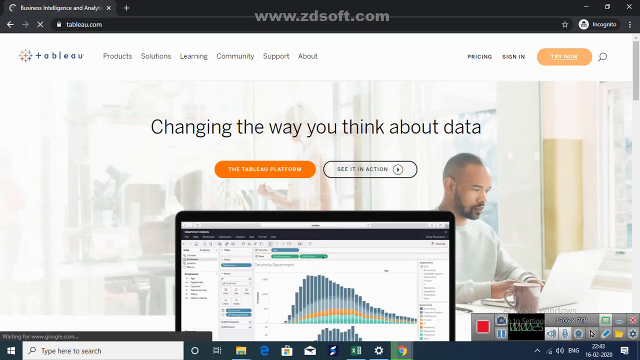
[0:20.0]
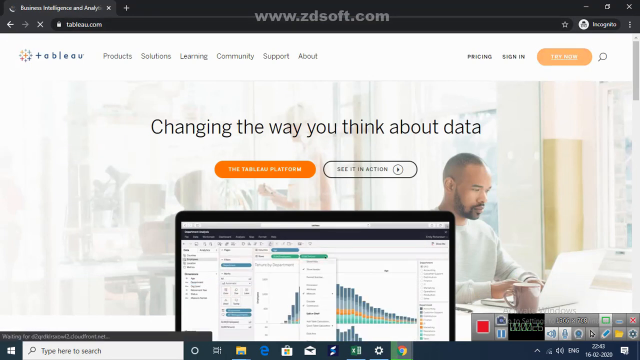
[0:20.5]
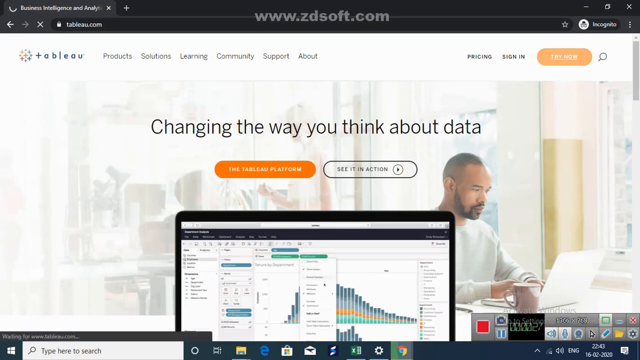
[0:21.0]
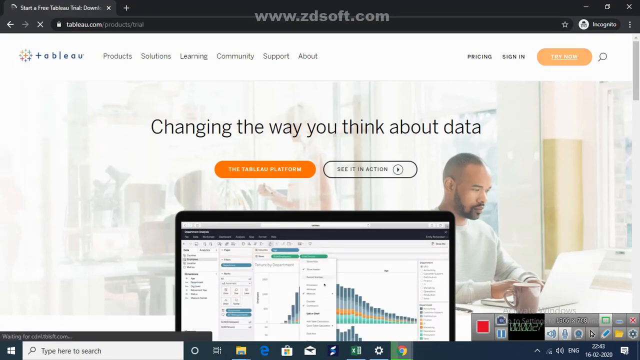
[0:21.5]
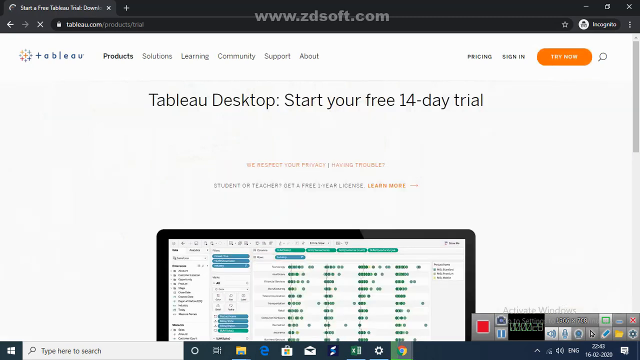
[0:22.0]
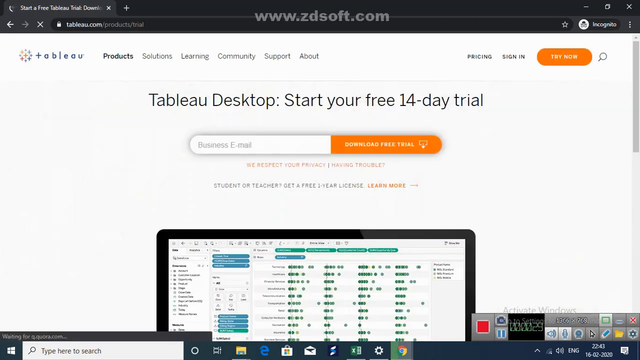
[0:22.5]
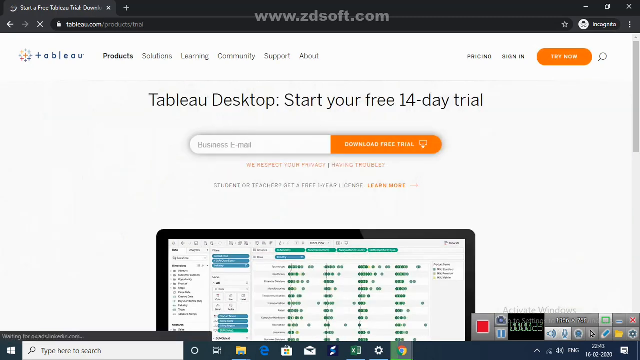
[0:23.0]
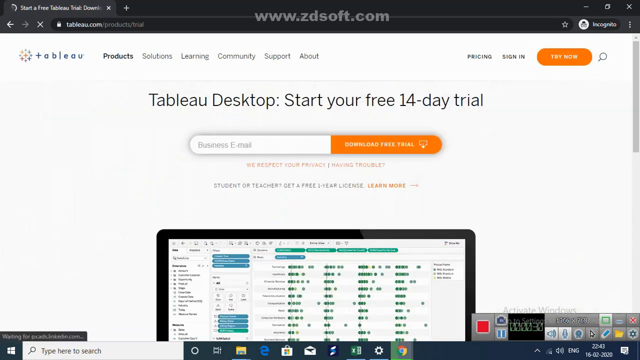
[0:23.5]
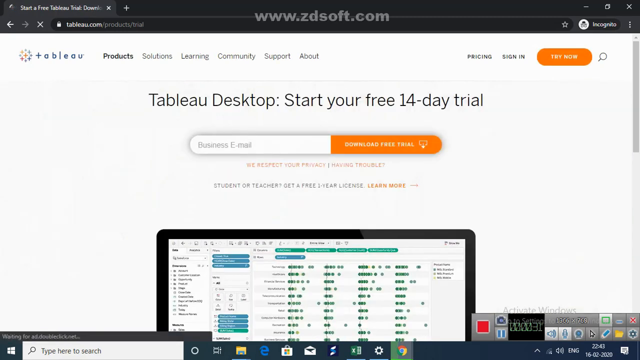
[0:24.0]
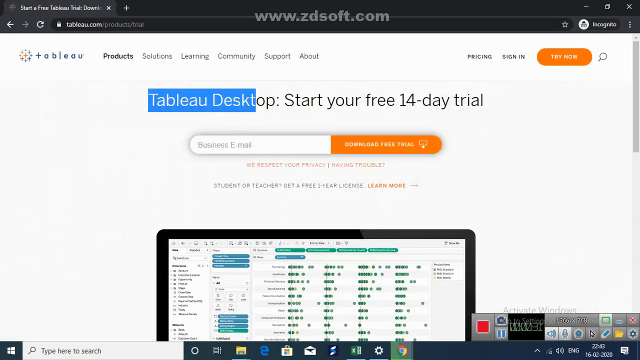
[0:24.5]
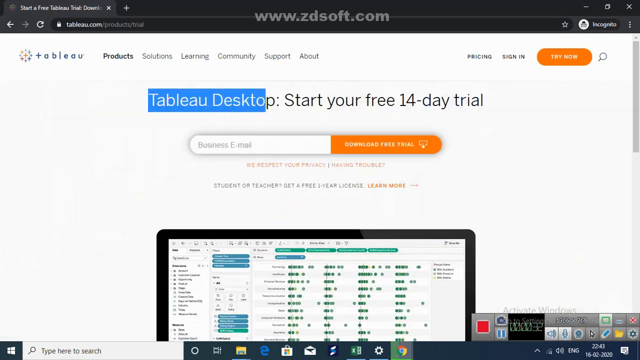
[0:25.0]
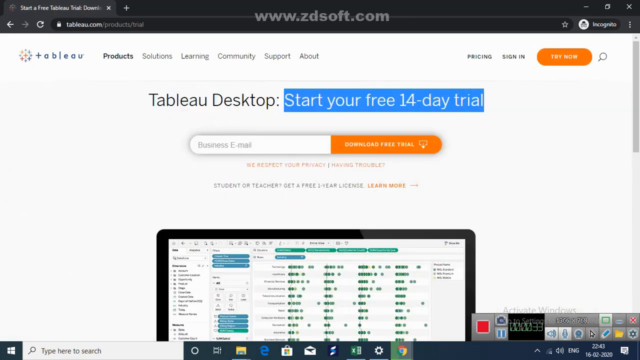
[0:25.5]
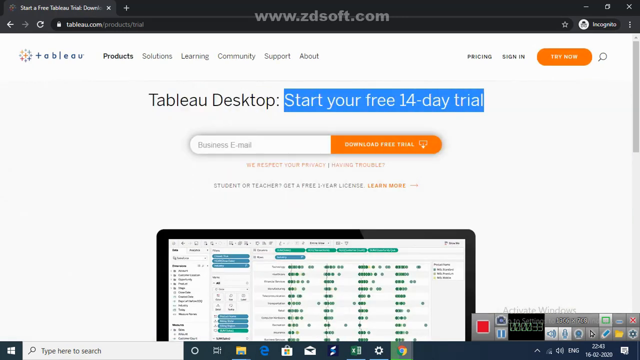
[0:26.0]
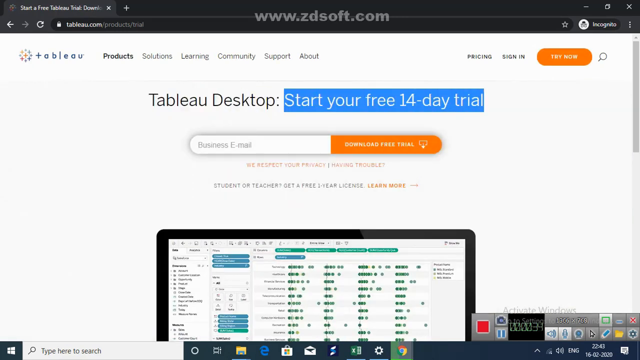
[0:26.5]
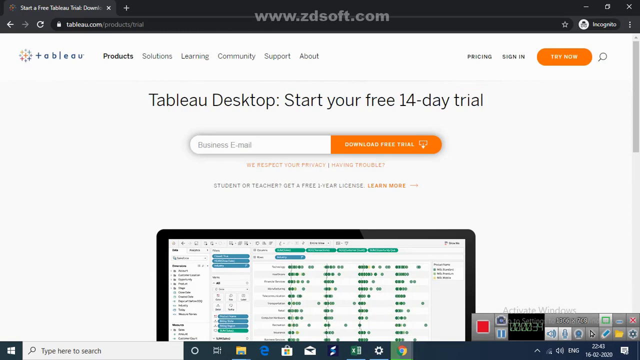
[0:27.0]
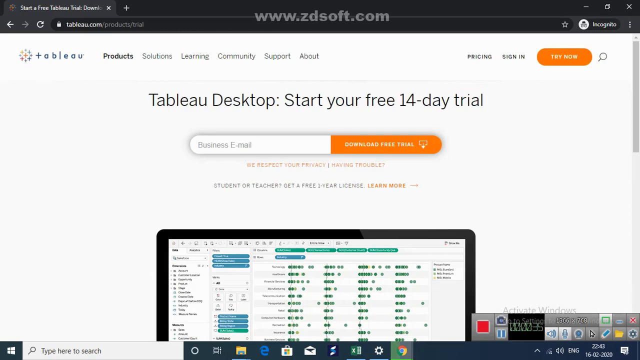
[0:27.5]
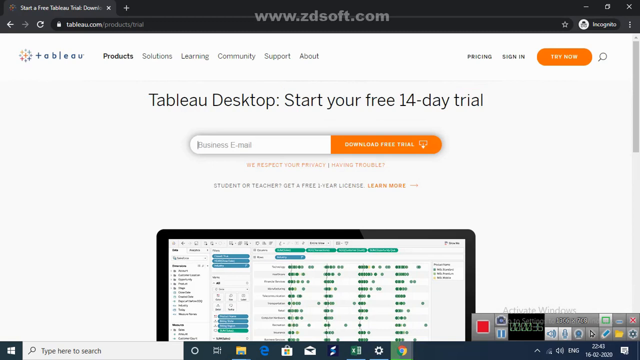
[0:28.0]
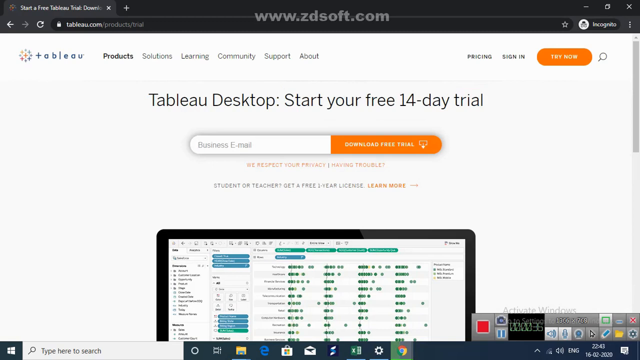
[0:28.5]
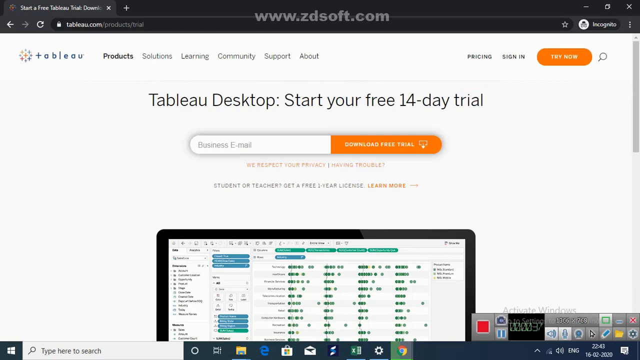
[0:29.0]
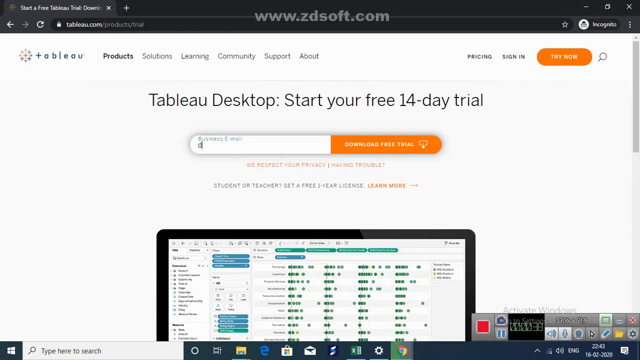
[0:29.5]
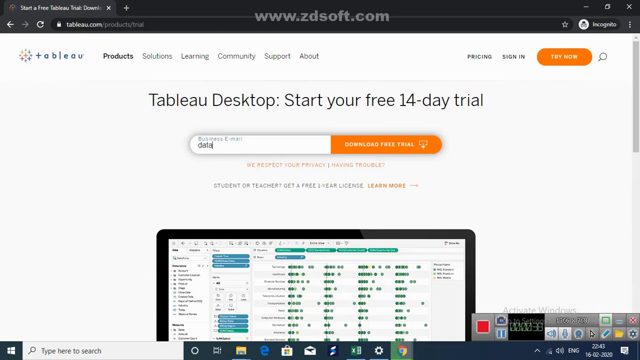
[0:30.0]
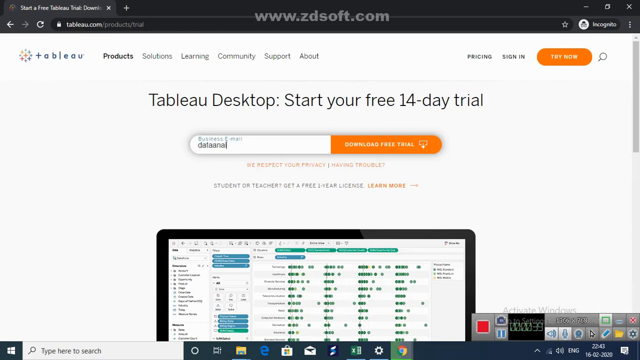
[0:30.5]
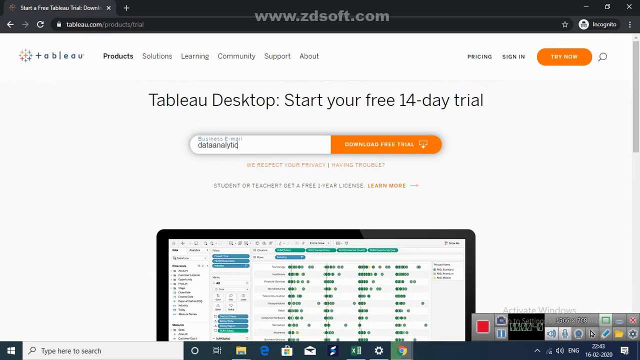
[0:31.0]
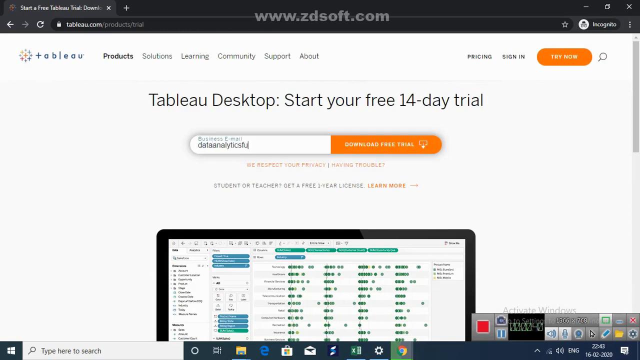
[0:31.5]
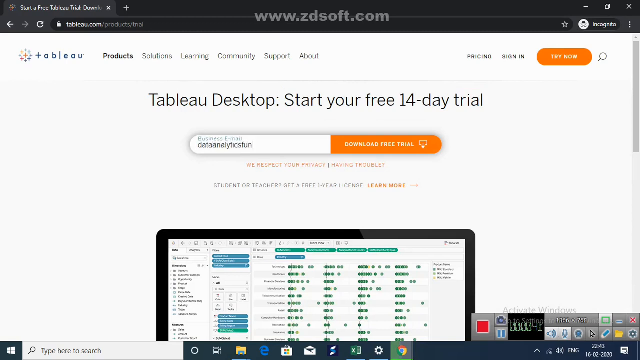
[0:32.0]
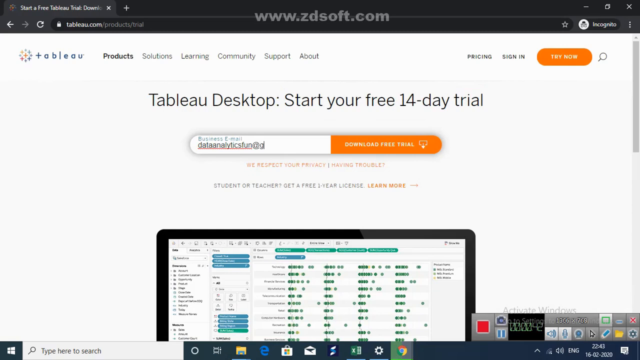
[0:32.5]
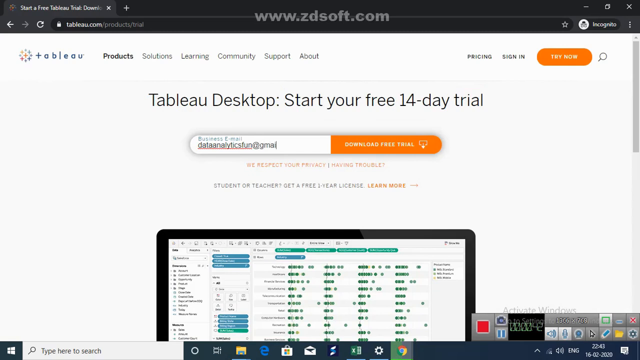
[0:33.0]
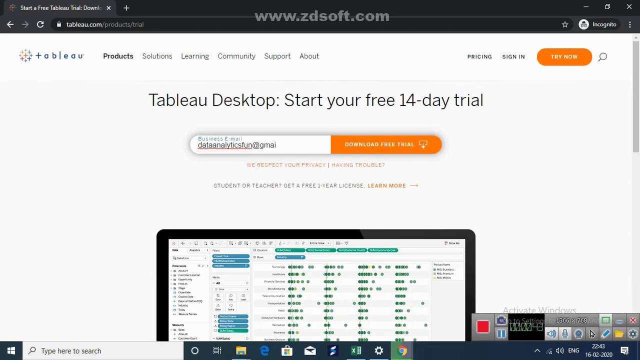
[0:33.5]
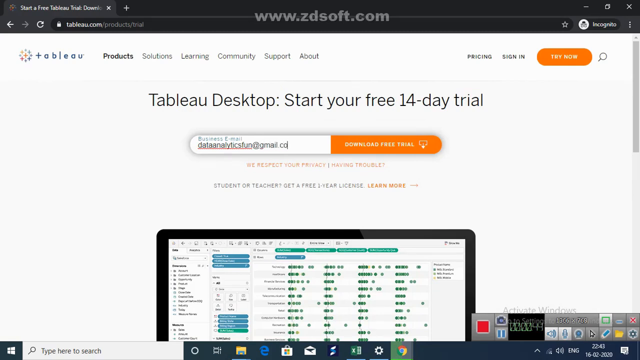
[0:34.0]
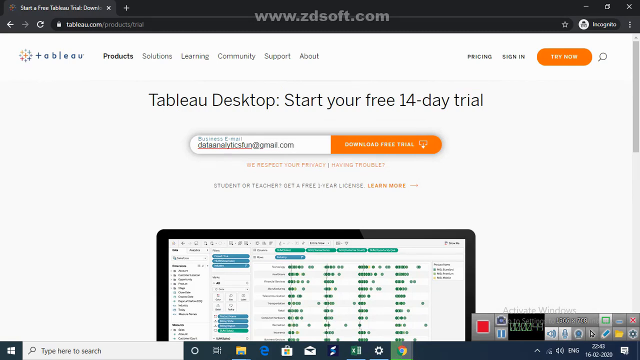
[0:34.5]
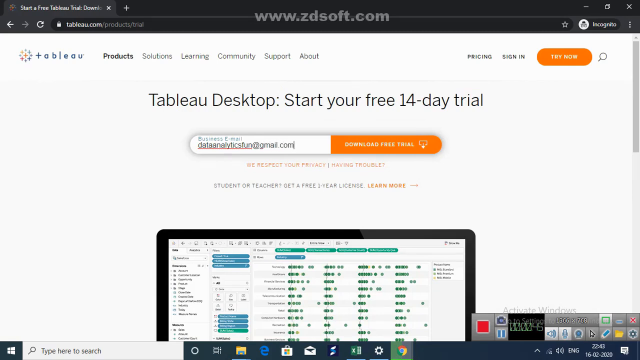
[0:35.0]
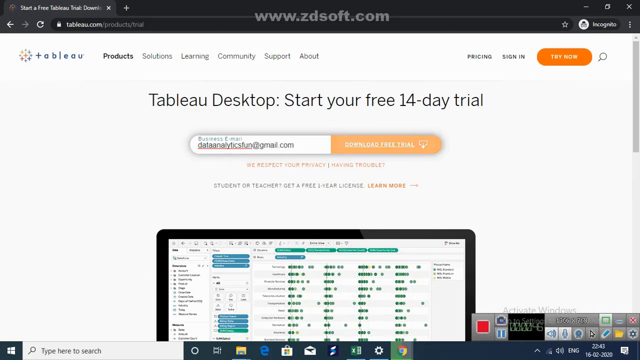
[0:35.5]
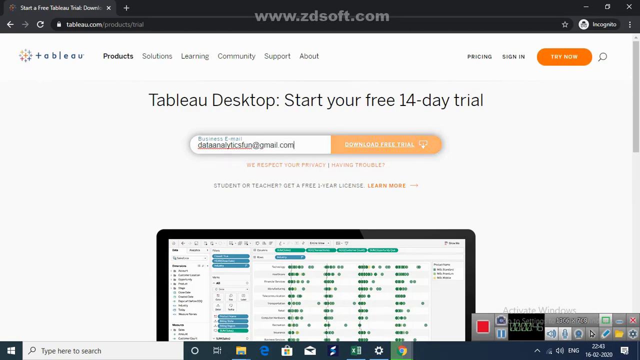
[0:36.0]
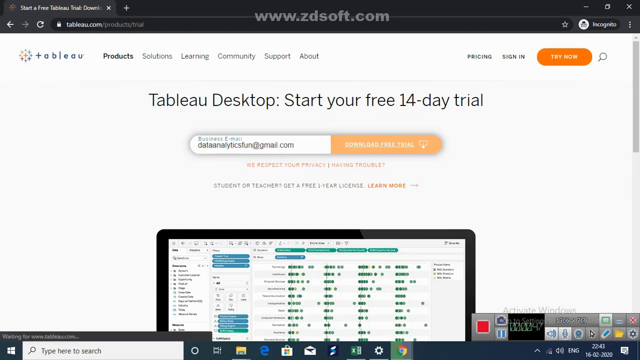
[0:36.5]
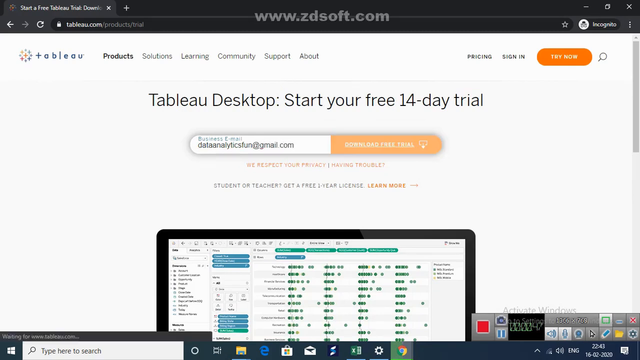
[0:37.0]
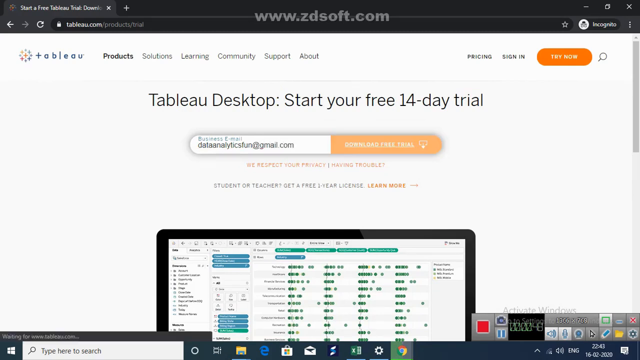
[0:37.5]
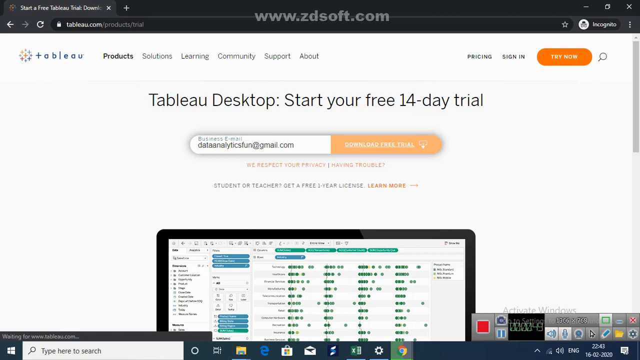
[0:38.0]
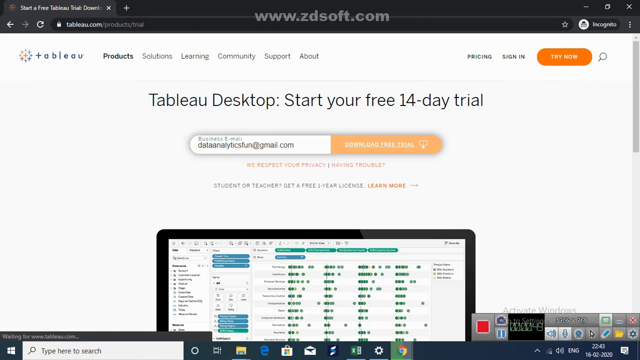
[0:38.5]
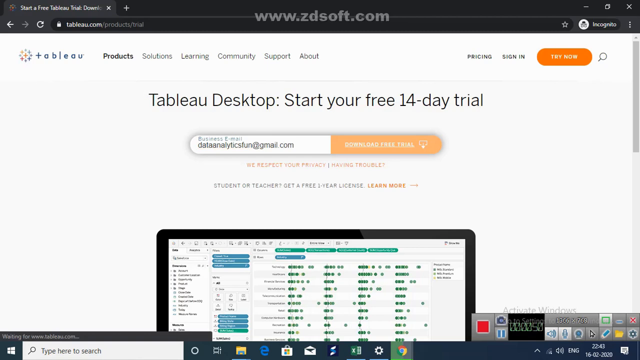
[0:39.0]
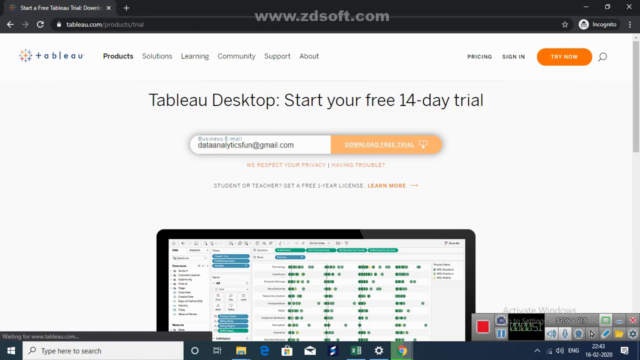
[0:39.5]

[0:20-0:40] A webpage shows black letters reading "changing the way you think about data". At the top, on a black background, "www.zdsoft.com" appears in white letters, with the URL at the top of the screen. Below the headline is an orange button whose text ends in "platform", and to its right a white button with a play symbol that says "see it in action". To the right of that, an African-American man sits at a desk facing the right side of the screen, looking down at an open laptop in front of him with his fingers on the keyboard. In the middle at the bottom of the screen is a small open computer screen showing a bar graph and a lot of information on a white background. The cursor clicks on something and the page switches to another screen that reads "TABLEAU desktop" and "Start your free 14-day trial". Below that is a search bar or similar field into which an email address is typed. The cursor clicks the orange button to its right, which says "download" followed by other words; the lettering is somewhat blurry and unreadable.